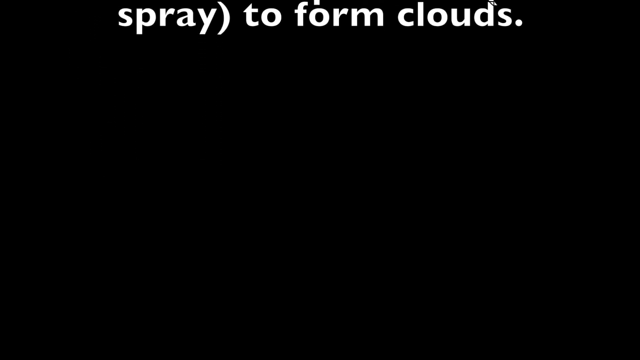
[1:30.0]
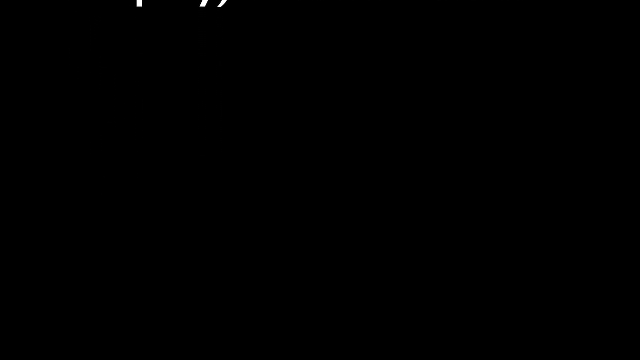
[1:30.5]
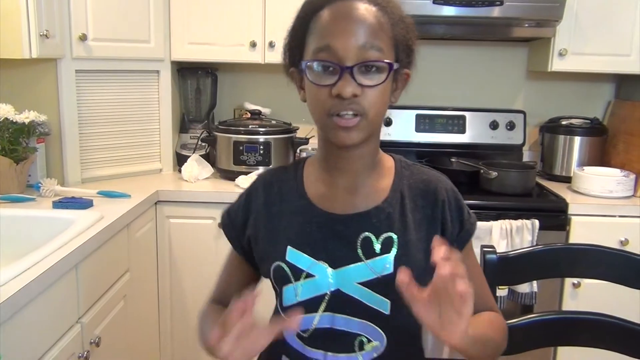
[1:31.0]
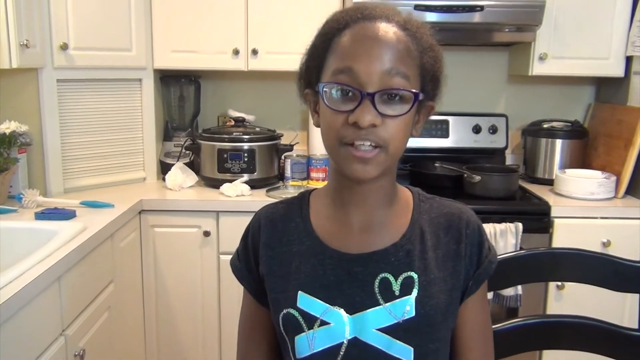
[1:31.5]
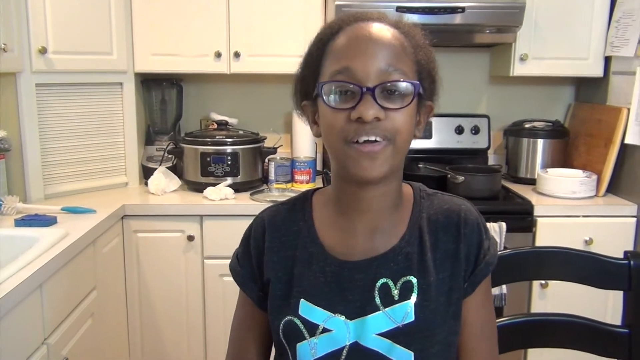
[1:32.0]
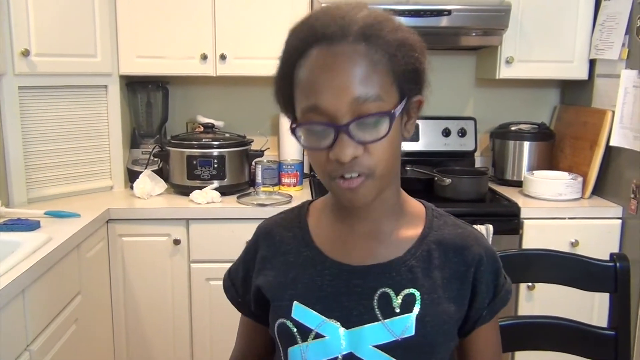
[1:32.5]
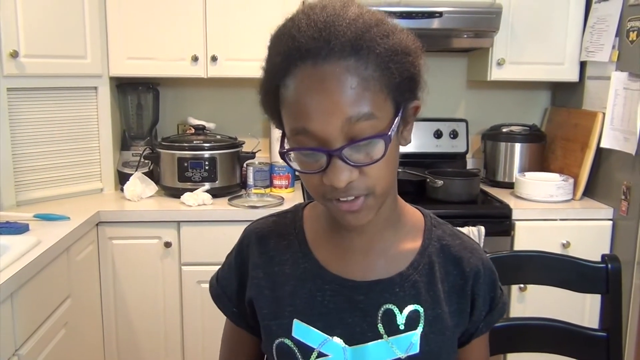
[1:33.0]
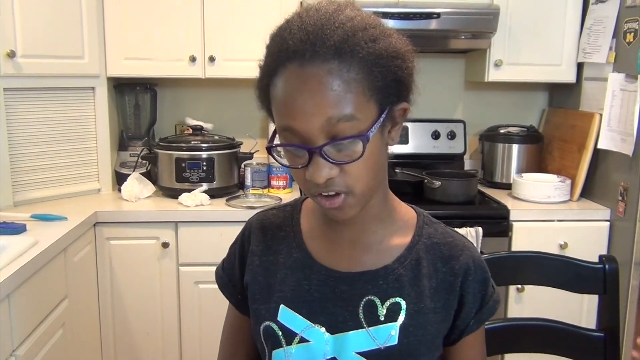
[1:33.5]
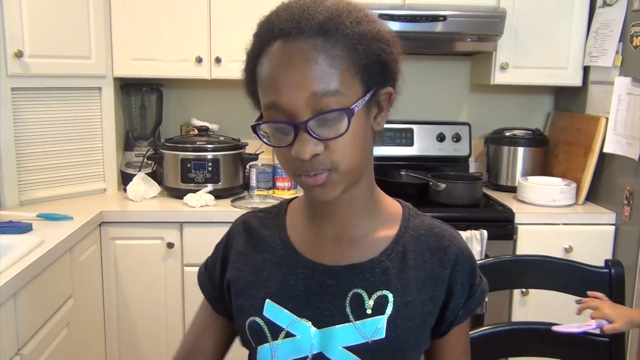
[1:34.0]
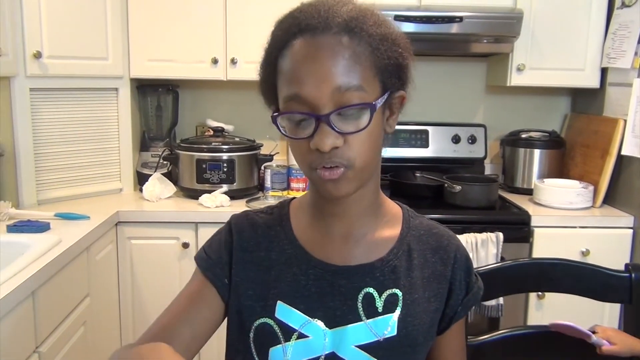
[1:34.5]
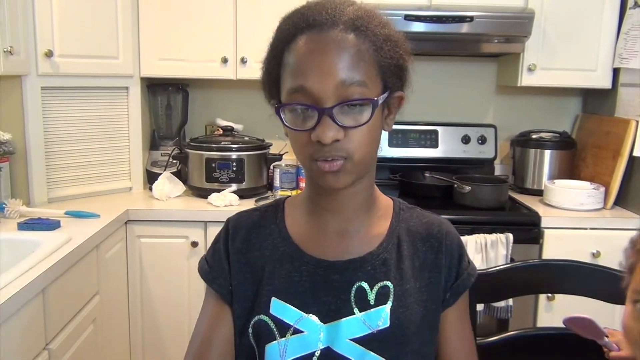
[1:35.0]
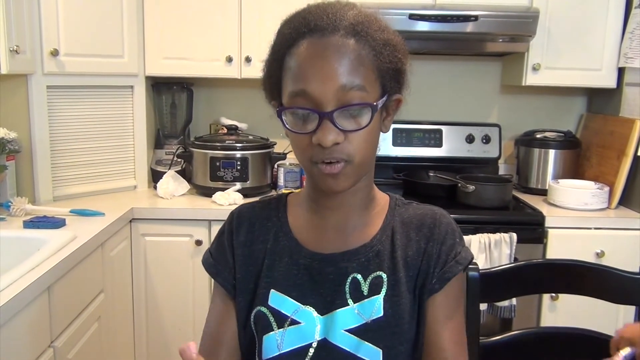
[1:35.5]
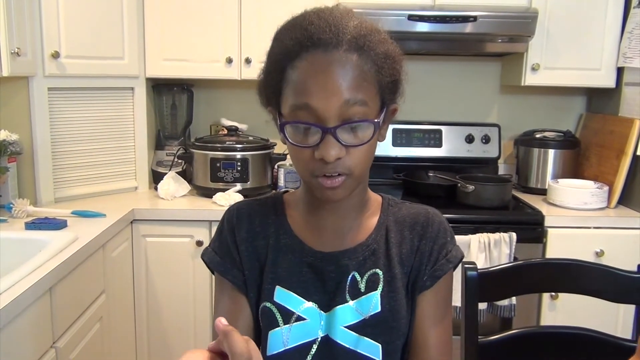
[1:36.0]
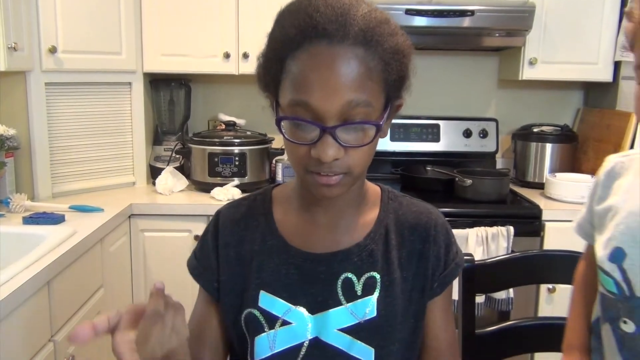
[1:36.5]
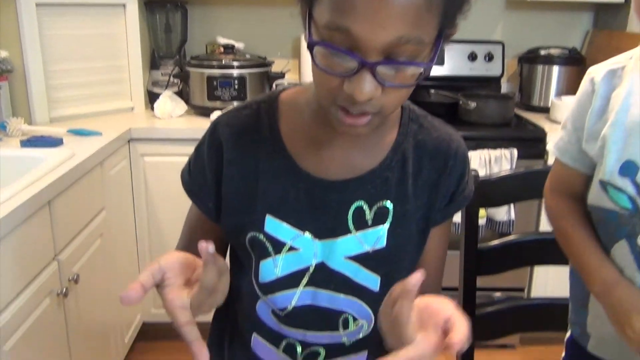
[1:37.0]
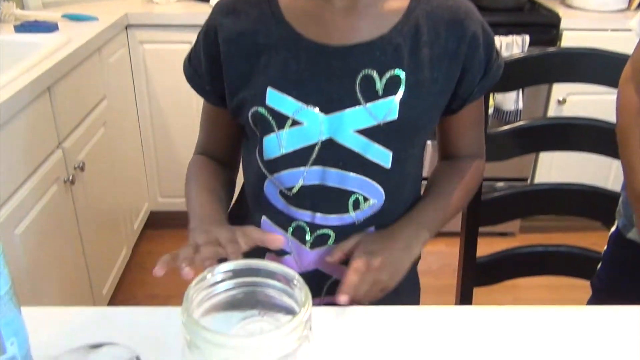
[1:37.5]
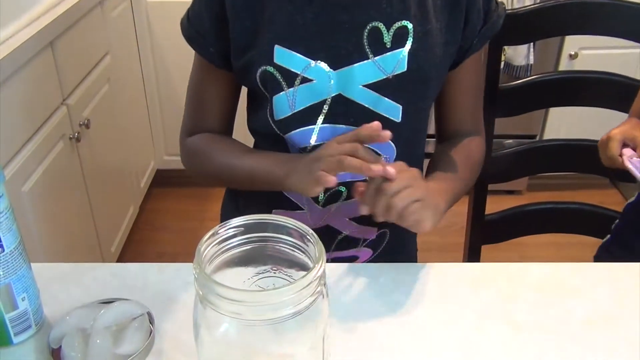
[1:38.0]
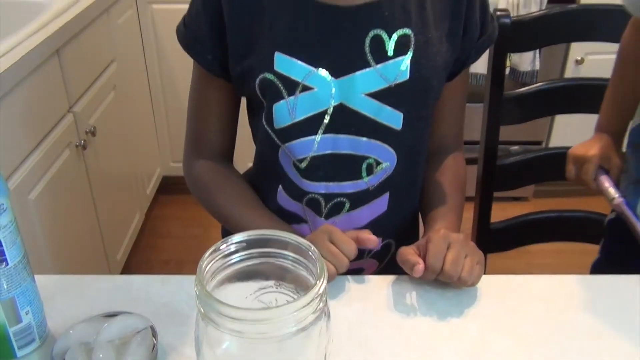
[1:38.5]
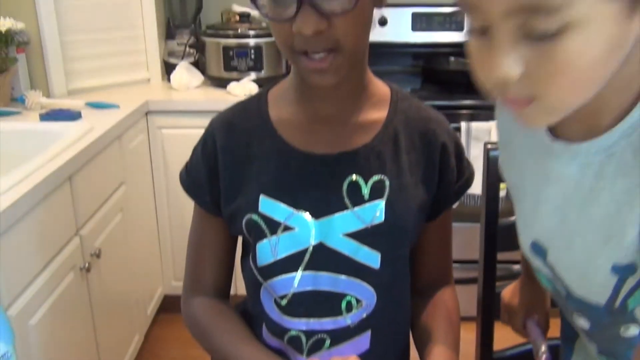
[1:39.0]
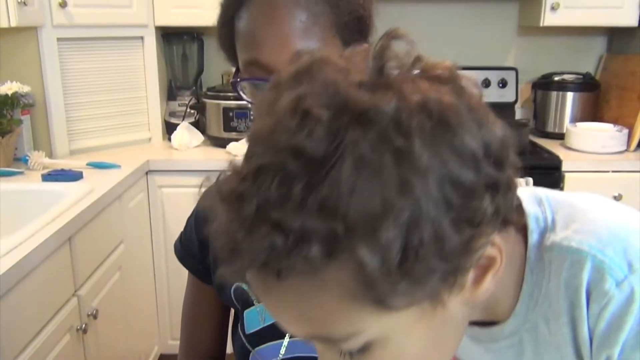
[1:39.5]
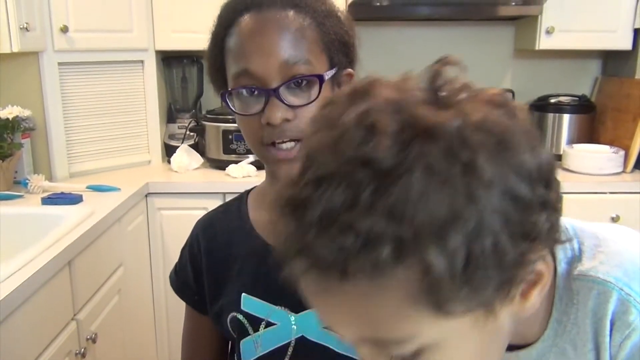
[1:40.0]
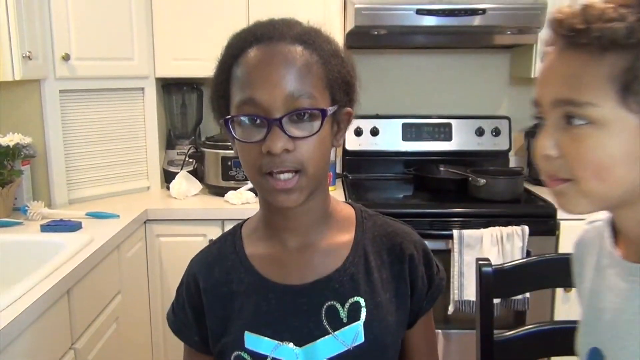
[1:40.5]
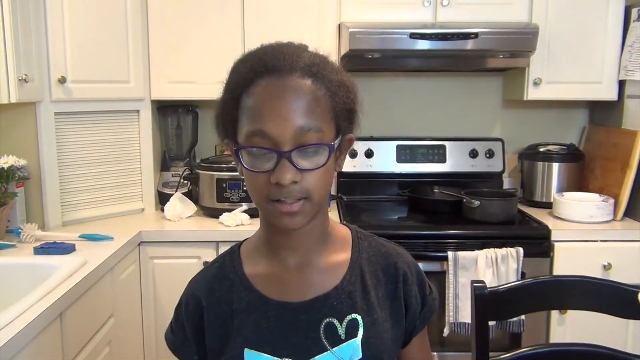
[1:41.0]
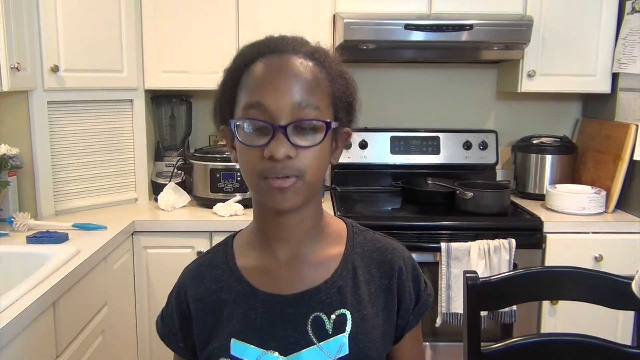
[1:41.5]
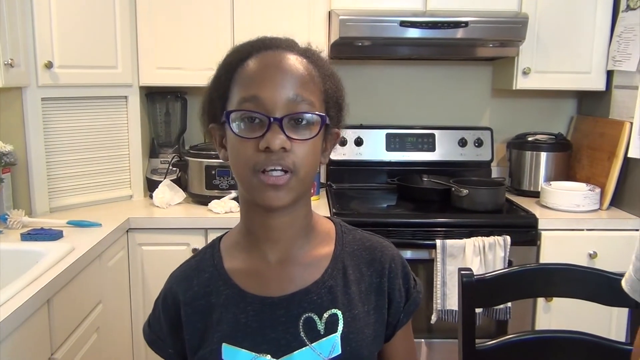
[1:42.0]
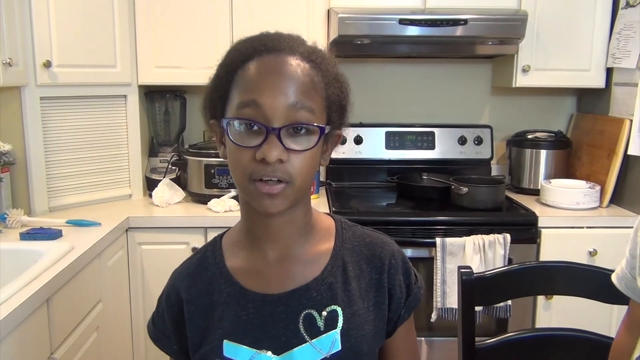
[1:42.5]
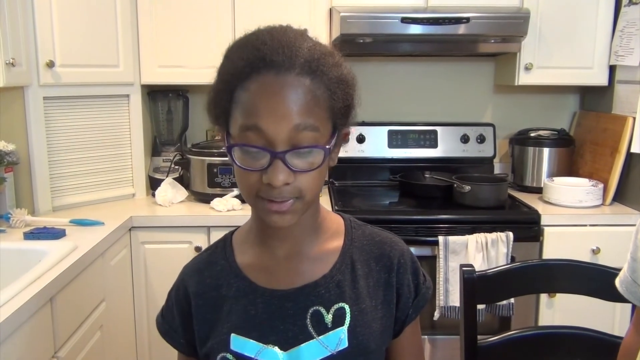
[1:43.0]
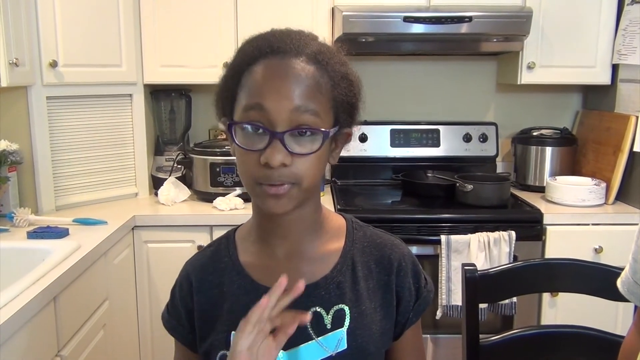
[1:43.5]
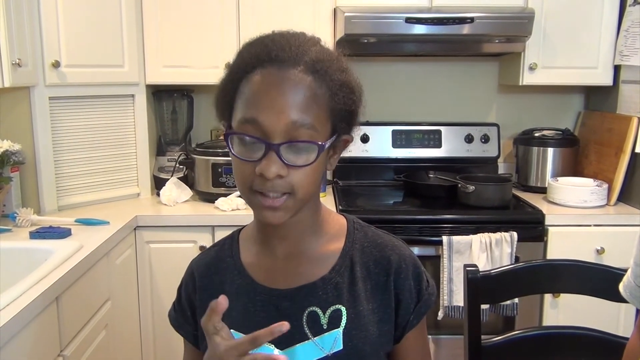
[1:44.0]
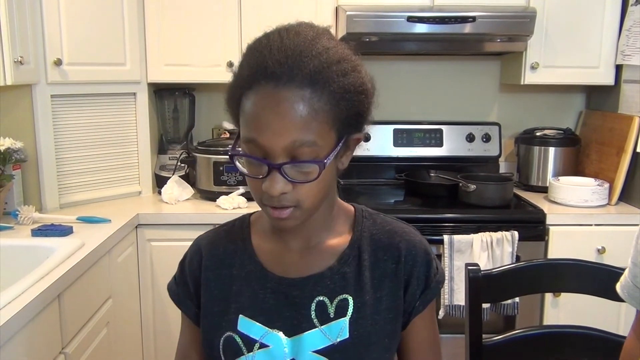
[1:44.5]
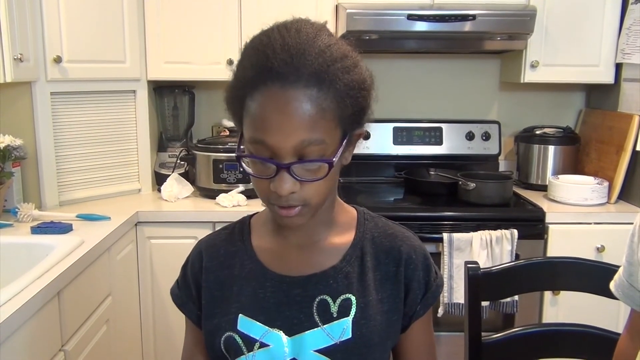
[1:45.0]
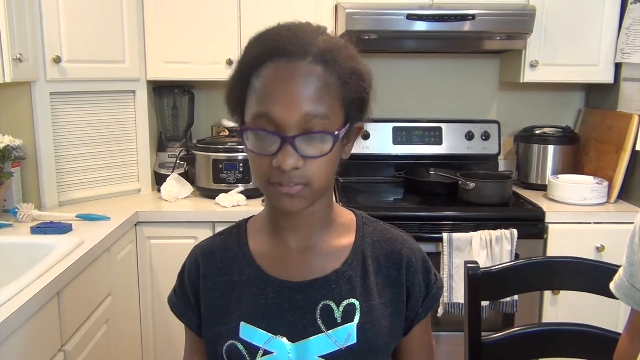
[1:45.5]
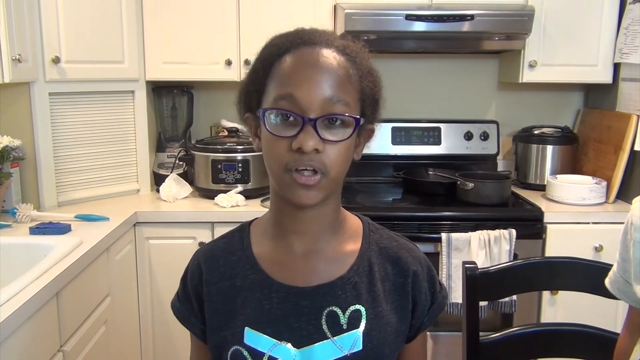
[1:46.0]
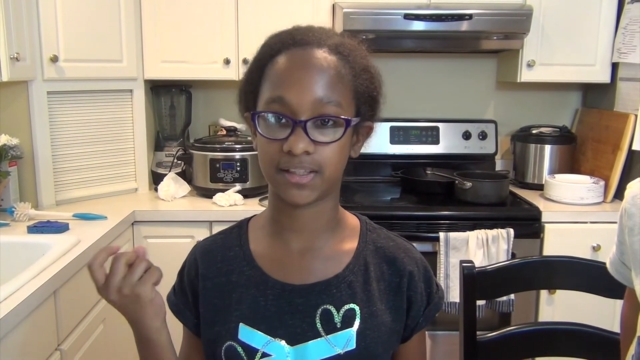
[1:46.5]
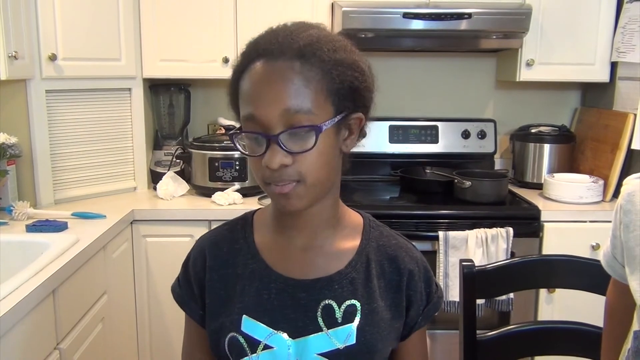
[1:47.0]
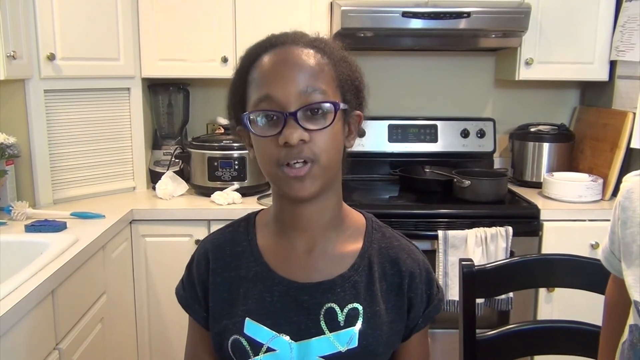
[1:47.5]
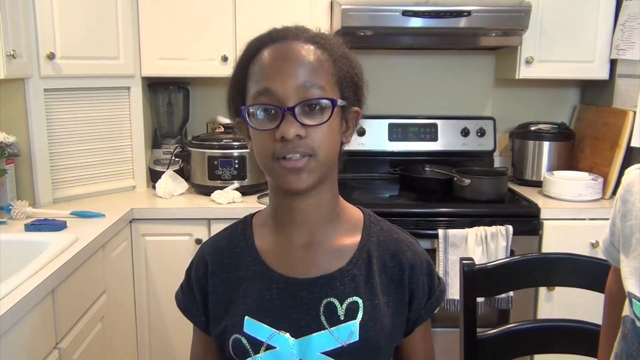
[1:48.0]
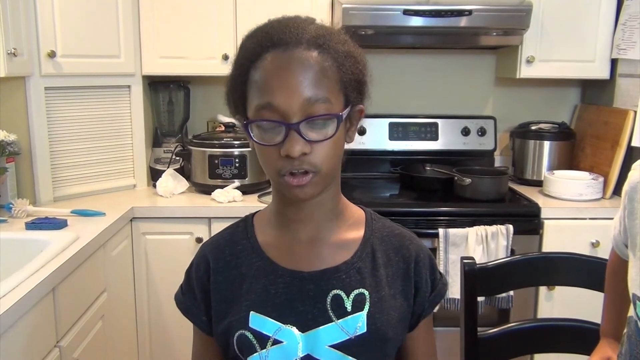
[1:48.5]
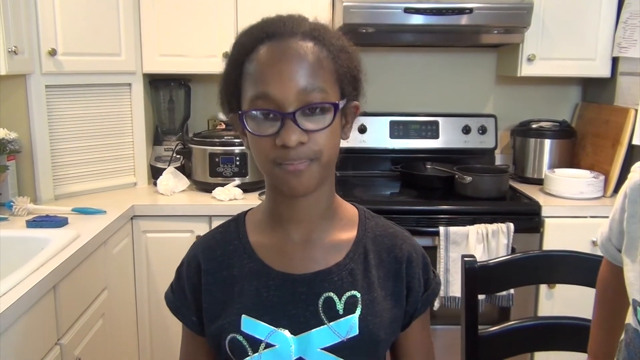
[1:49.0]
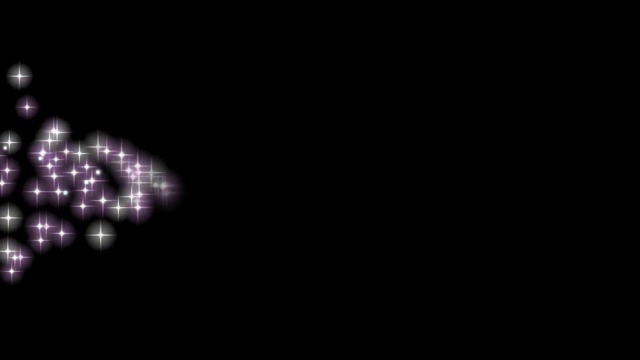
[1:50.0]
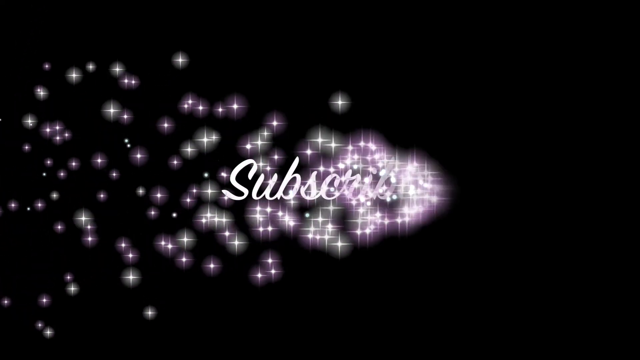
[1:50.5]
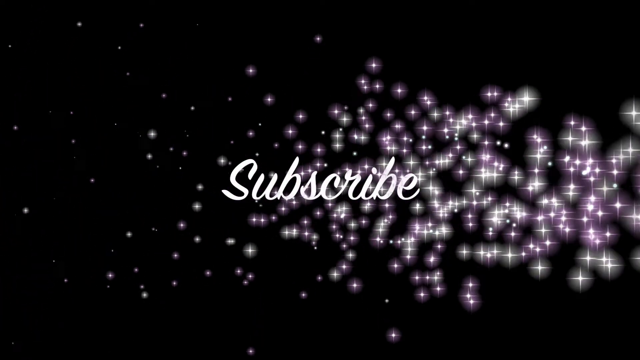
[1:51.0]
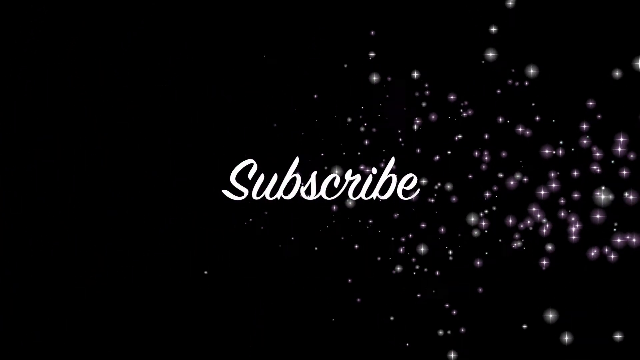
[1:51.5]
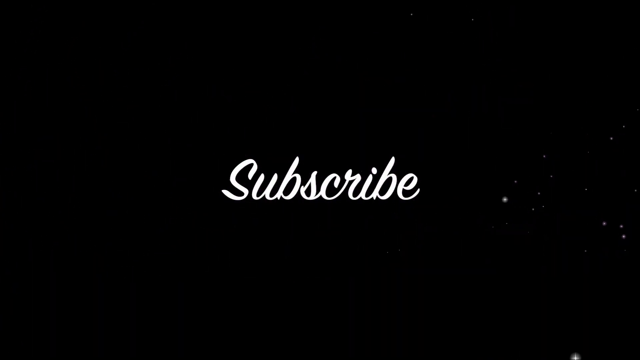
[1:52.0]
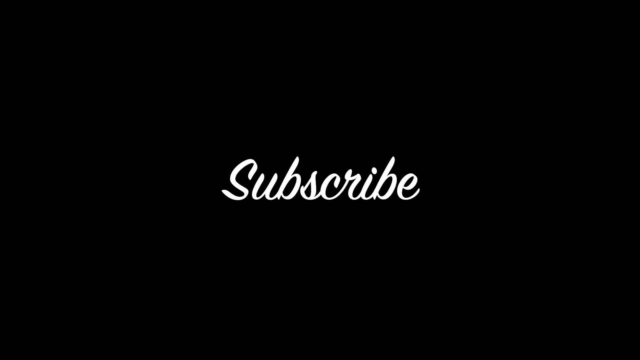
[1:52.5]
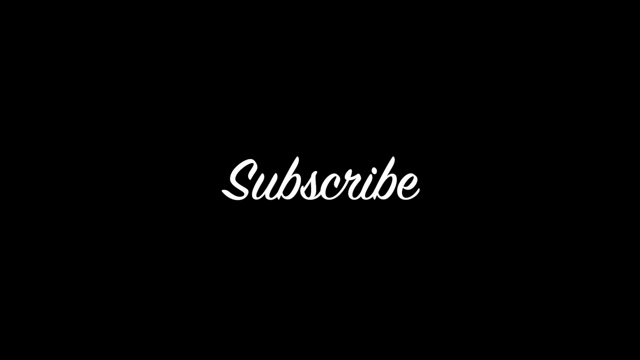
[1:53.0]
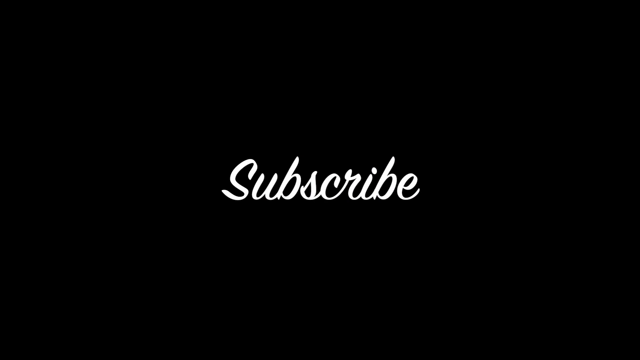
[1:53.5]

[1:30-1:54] The video cuts to the girl in the kitchen speaking directly to the camera. She looks down, and the camera pans down to show an open mason jar. The boy next to her looks over the jar, blocking her view, then moves back. She keeps speaking to the camera, moving her hands around and periodically looking down at the jar in front of her. The video then cuts to black, and the word "subscribe" appears in cursive with sparkles in the background.